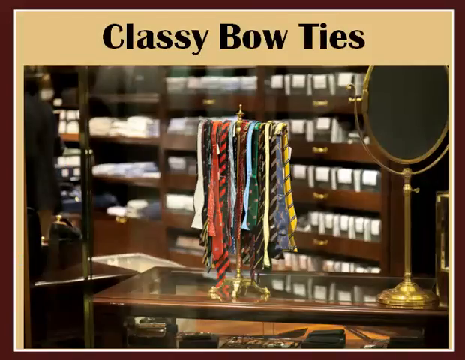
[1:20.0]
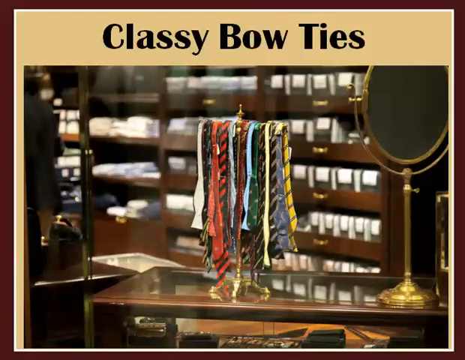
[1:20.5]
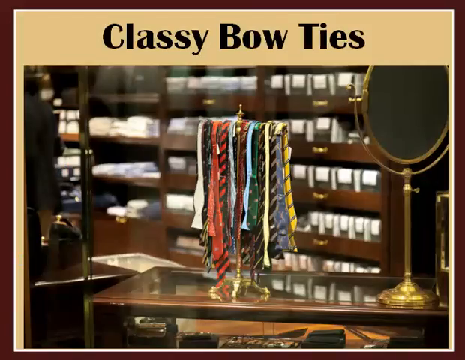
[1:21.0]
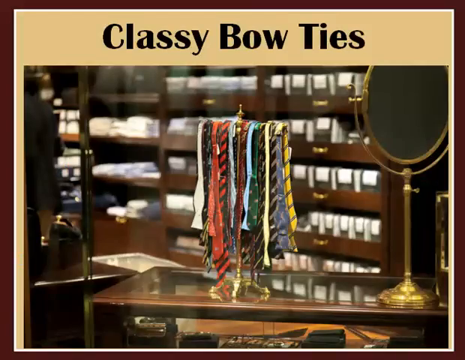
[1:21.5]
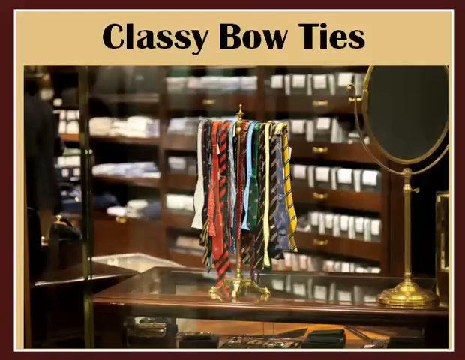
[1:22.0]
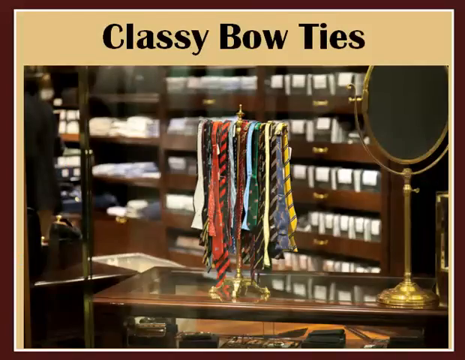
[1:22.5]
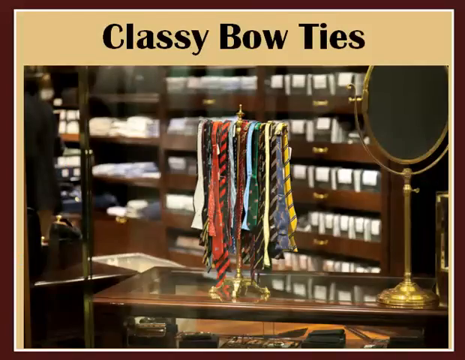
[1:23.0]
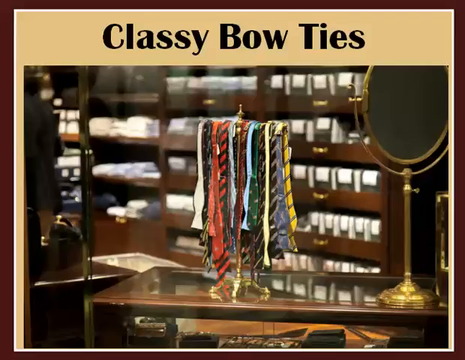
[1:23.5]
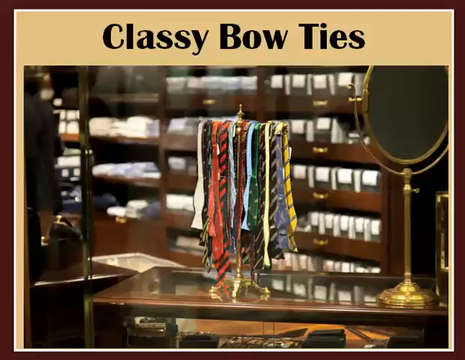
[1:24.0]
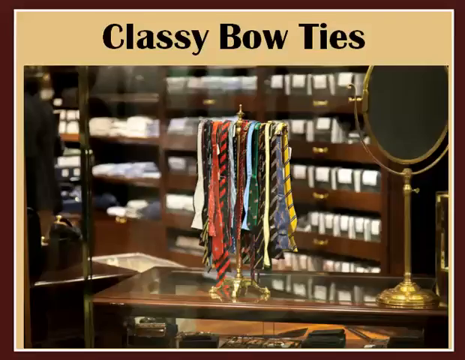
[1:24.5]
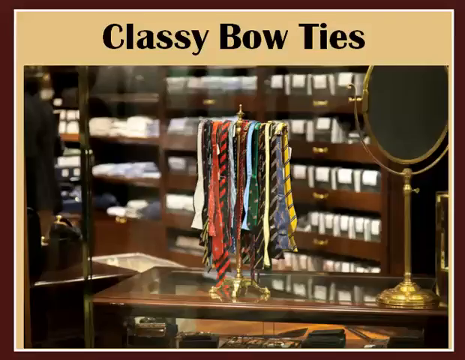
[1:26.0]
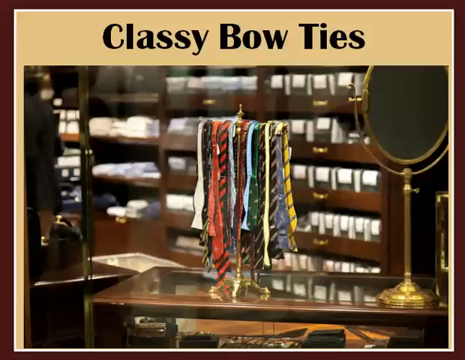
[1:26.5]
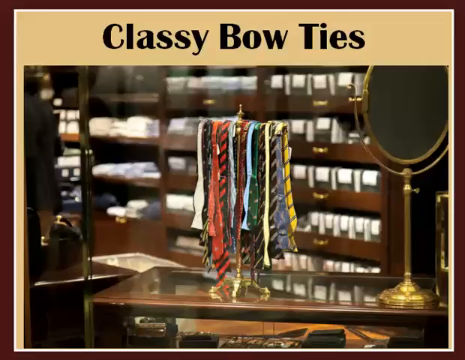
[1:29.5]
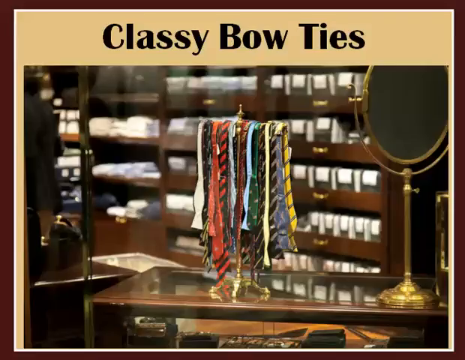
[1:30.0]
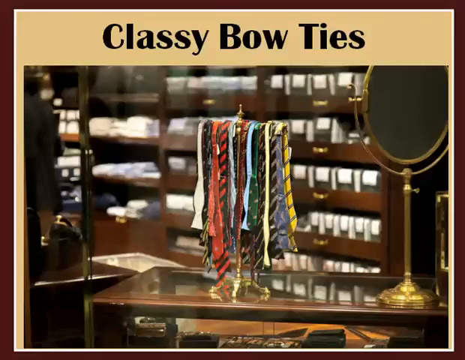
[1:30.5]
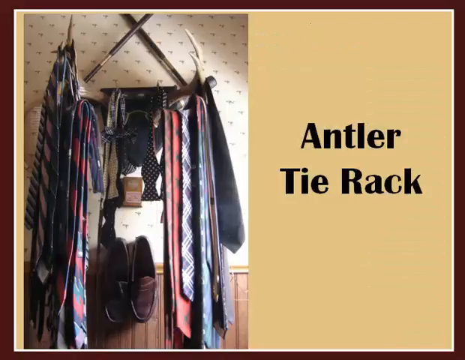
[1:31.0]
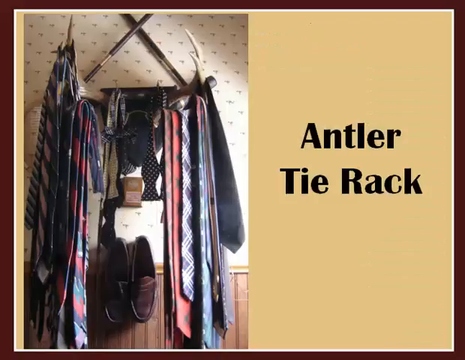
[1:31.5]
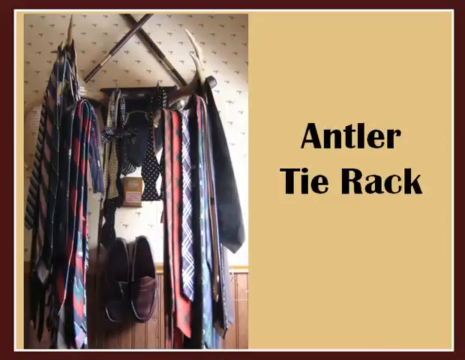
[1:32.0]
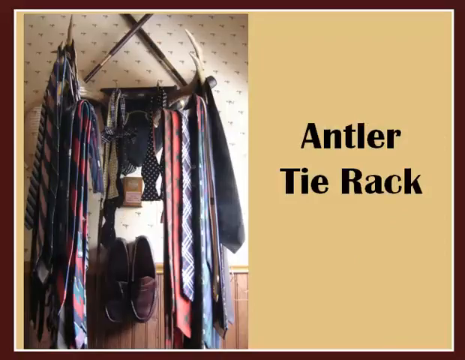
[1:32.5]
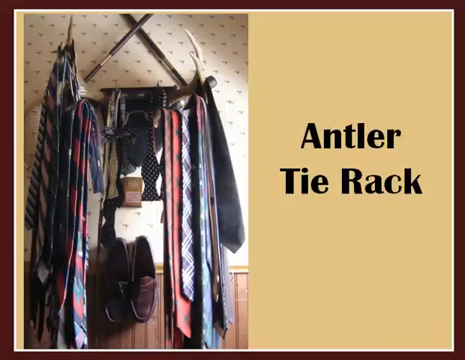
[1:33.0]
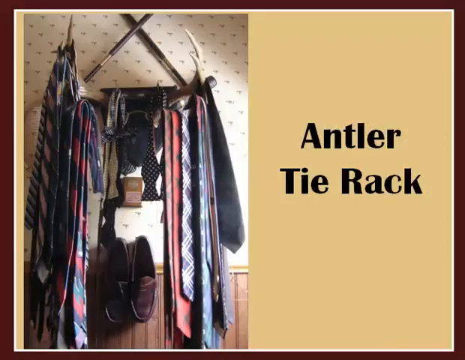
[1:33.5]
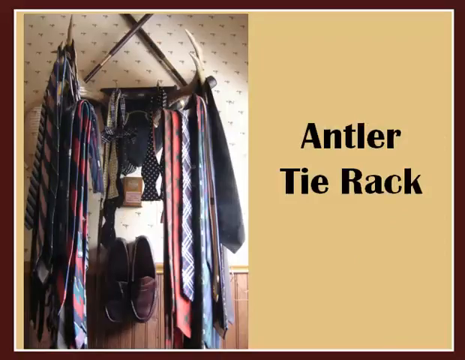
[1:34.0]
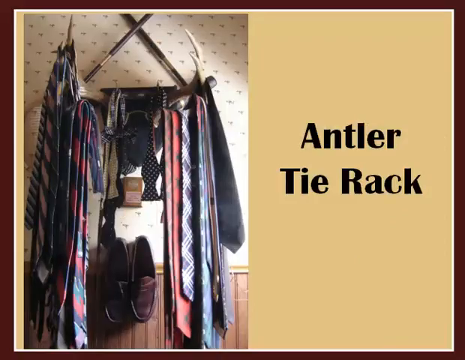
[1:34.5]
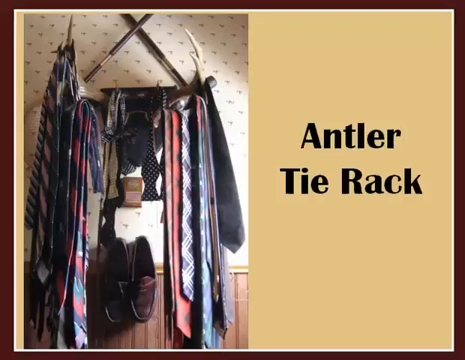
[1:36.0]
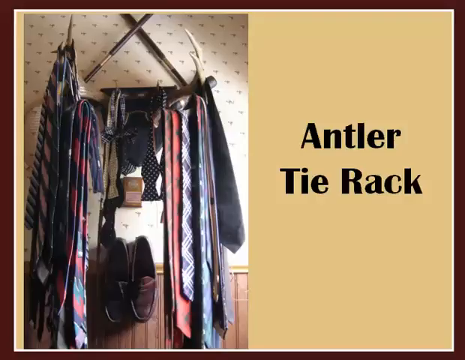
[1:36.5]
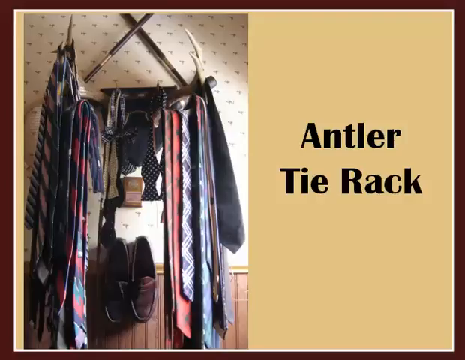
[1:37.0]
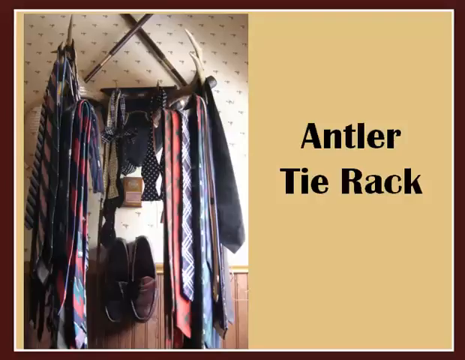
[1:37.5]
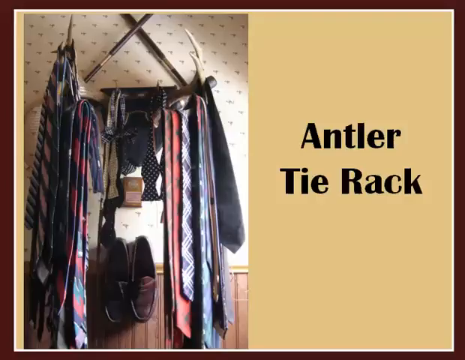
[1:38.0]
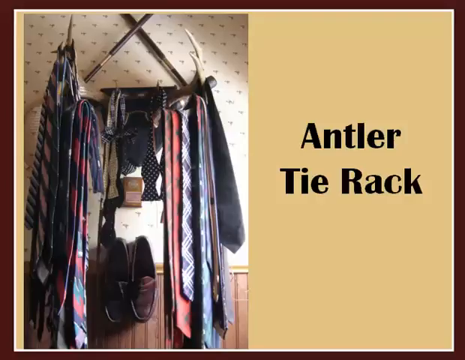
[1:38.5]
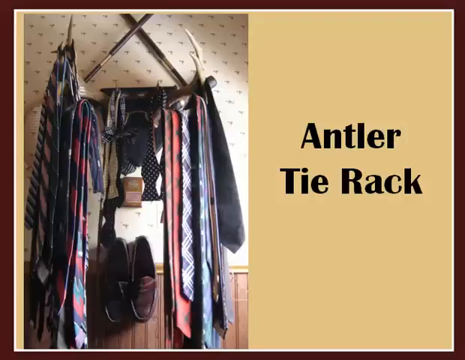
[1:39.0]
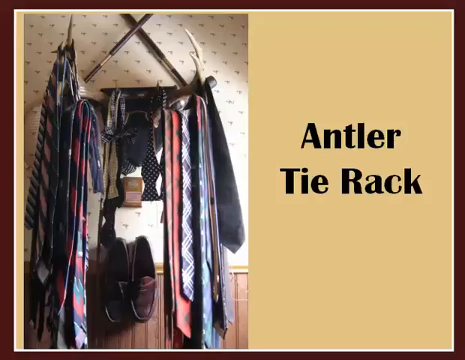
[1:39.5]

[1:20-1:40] The classy bow tie shop continues to be shown. In the shop there is what looks like a table made of wooden glass, and on top of it is a golden stand with four legs. Bow ties hang on each side of the stand in different colours and designs, including blue, red, black, green and yellow. Beside the stand is a round mirror on a golden stand, facing backwards; it is the kind of mirror that can flip around. In the background are shelves that appear to hold clothes. The video then moves on to the antler tie rack: on the right side, ties hang on the horns of an antler, and below that a pair of brown men's shoes, which look like leather, hangs on the wall.